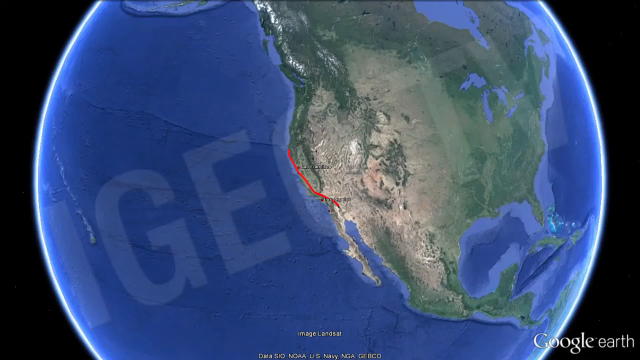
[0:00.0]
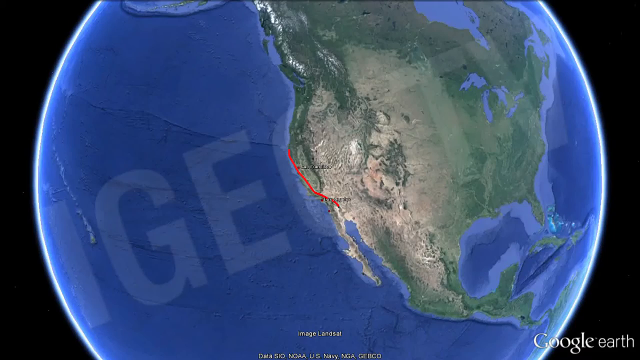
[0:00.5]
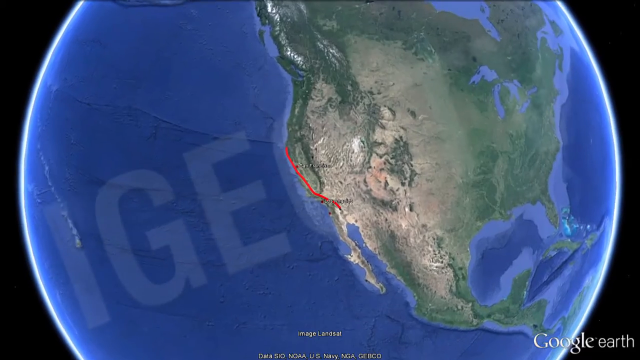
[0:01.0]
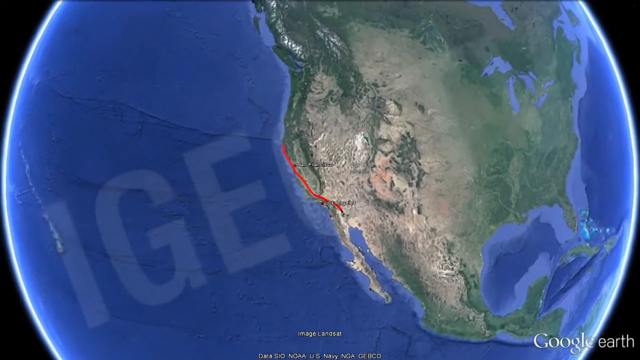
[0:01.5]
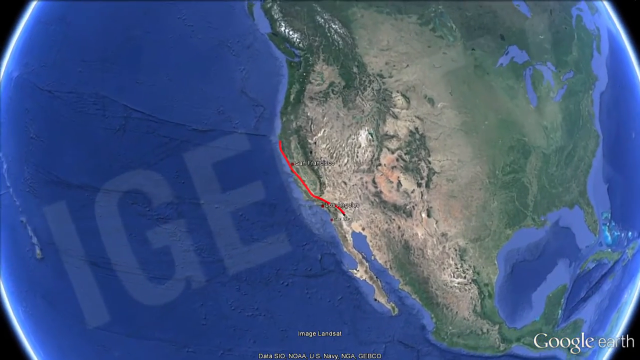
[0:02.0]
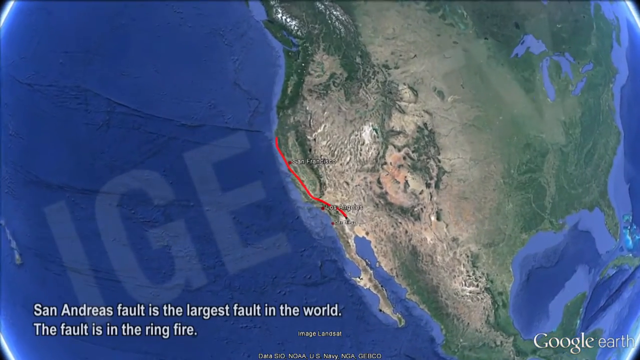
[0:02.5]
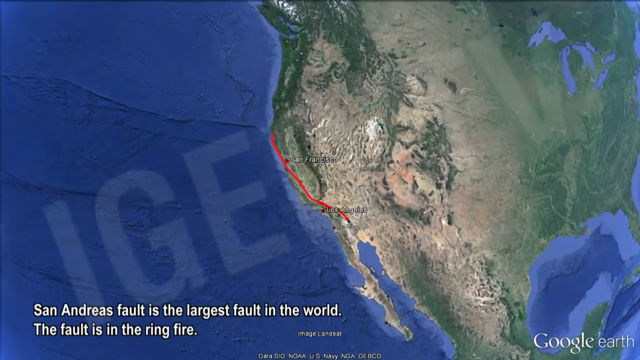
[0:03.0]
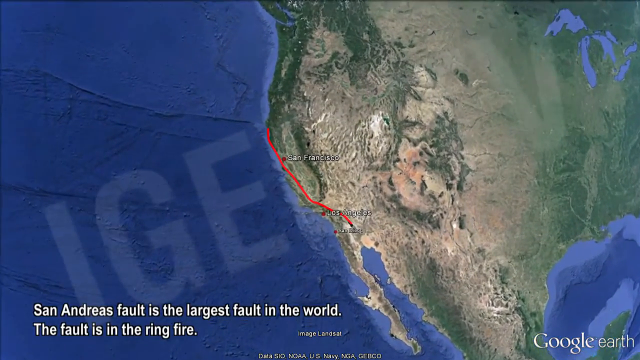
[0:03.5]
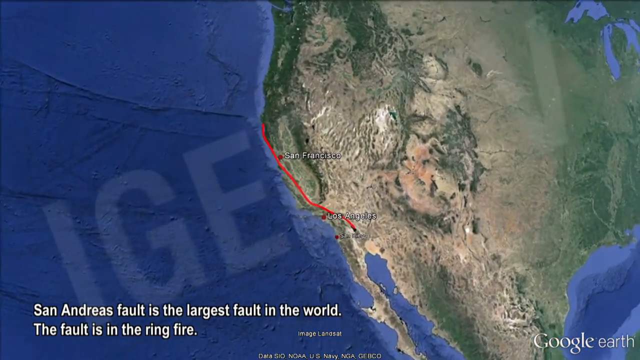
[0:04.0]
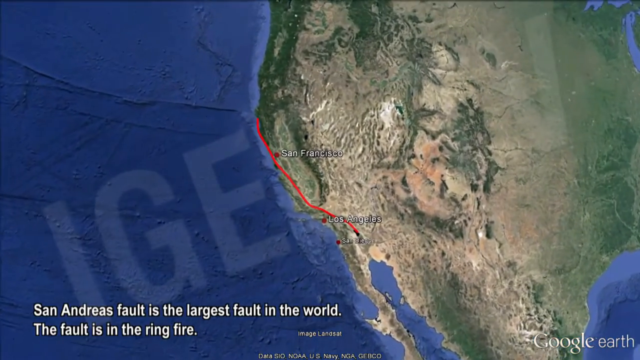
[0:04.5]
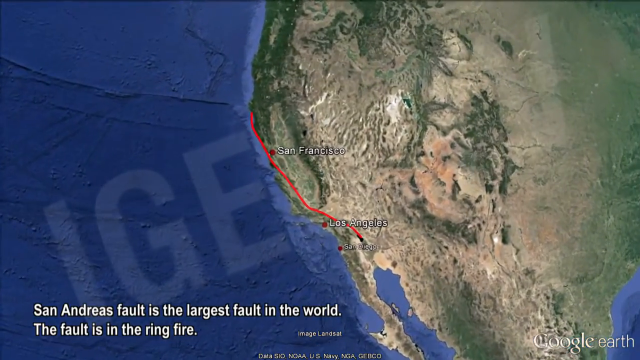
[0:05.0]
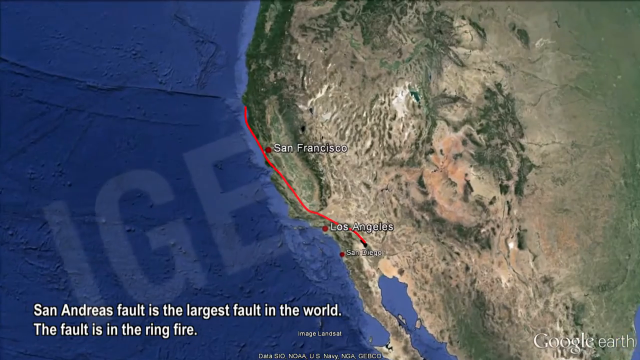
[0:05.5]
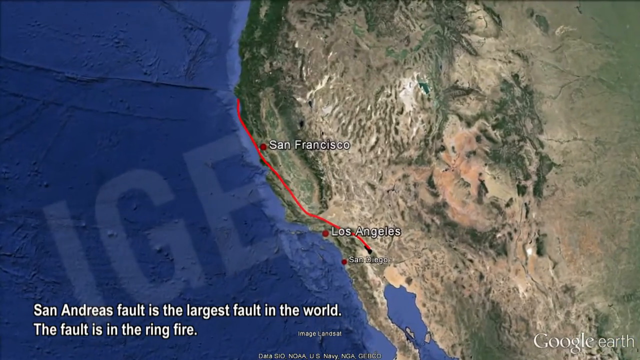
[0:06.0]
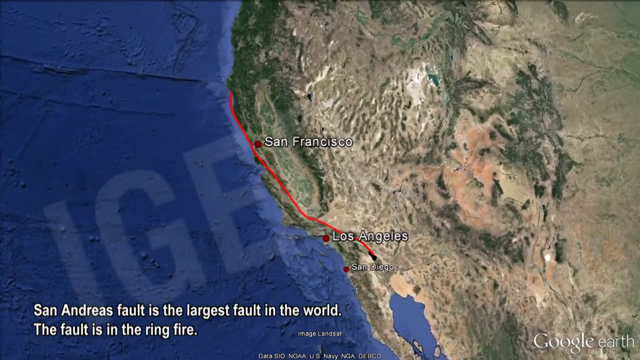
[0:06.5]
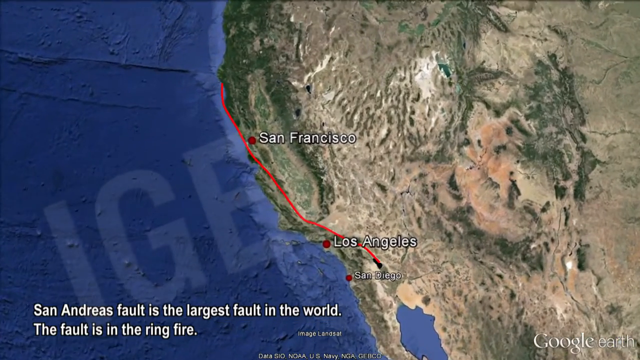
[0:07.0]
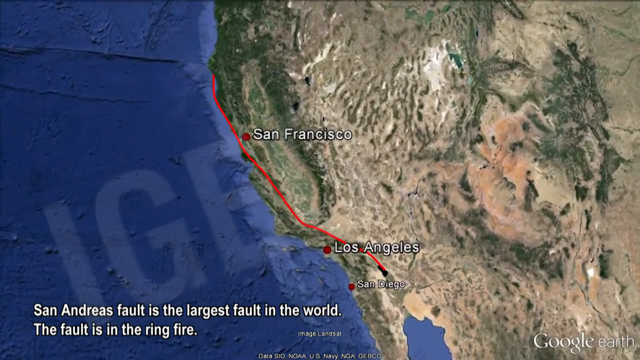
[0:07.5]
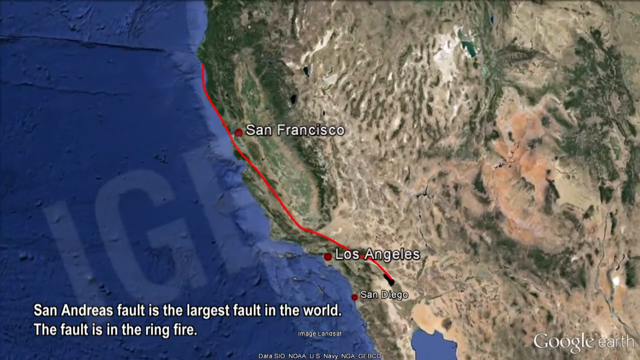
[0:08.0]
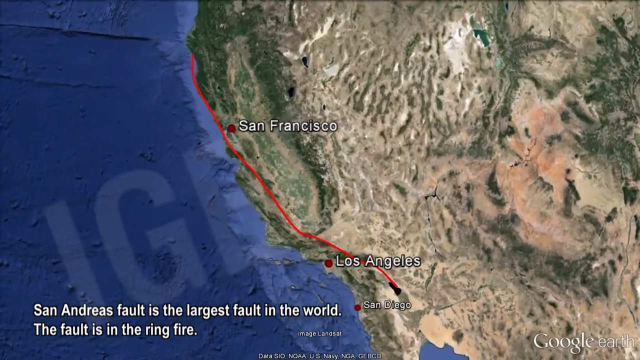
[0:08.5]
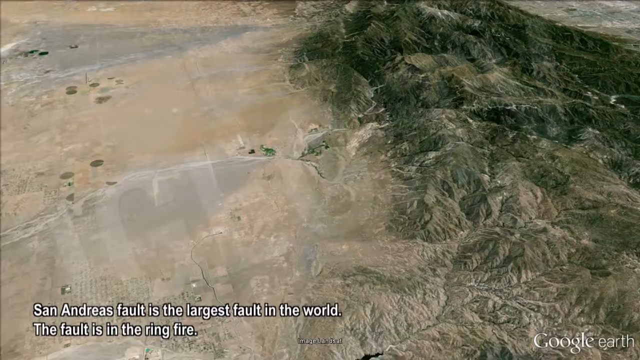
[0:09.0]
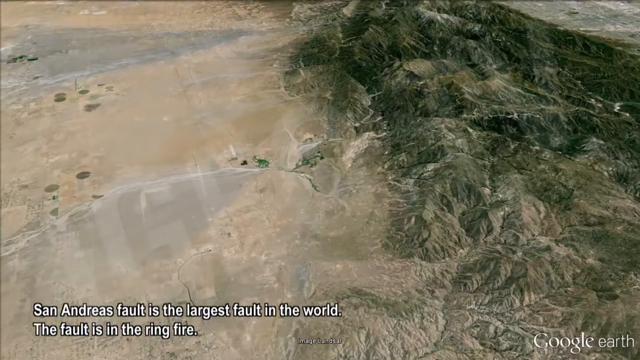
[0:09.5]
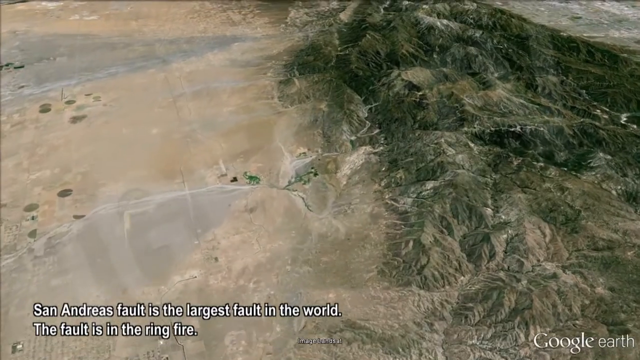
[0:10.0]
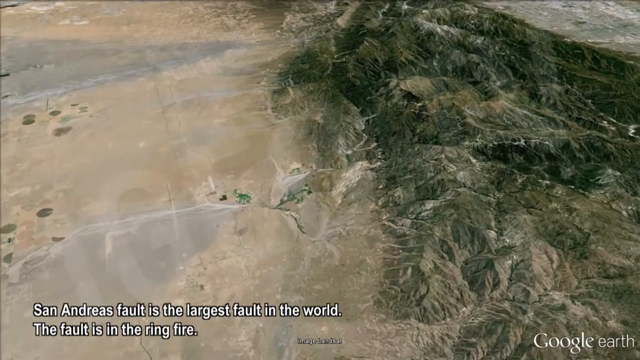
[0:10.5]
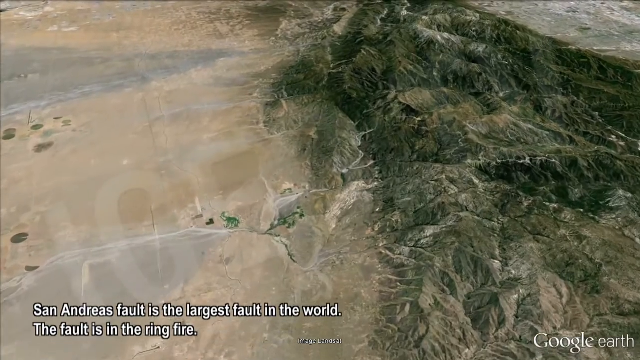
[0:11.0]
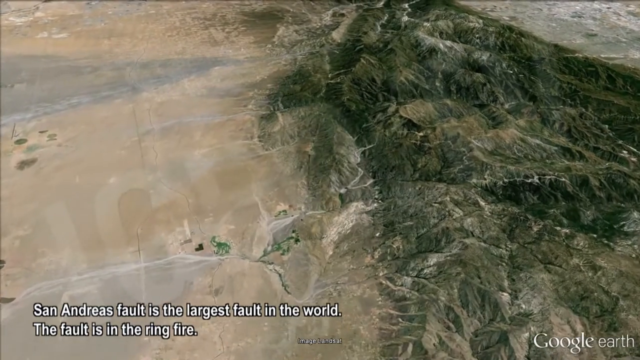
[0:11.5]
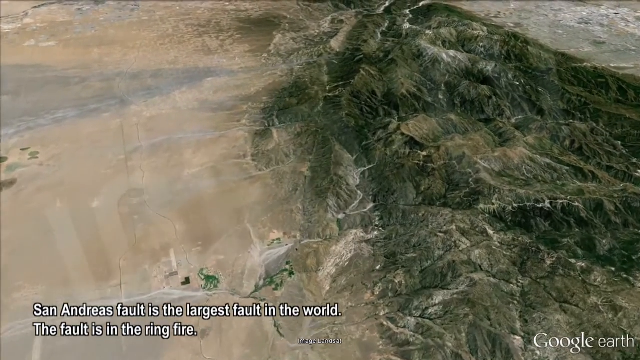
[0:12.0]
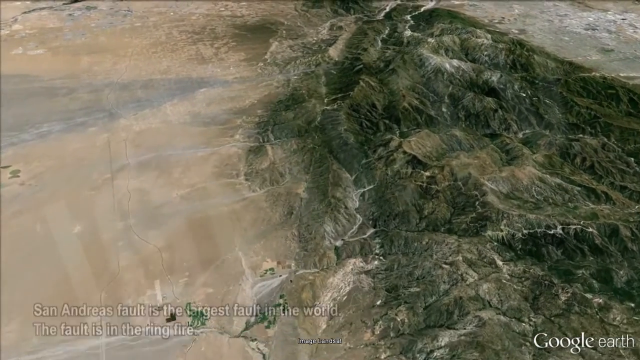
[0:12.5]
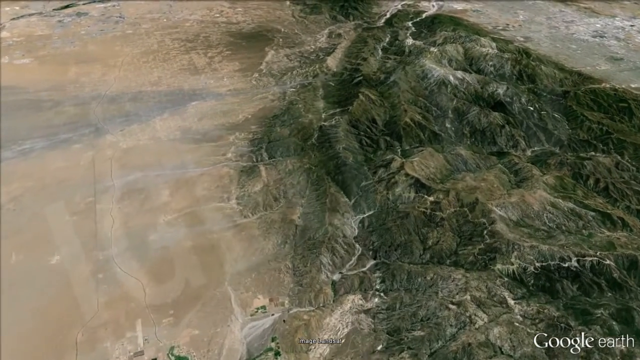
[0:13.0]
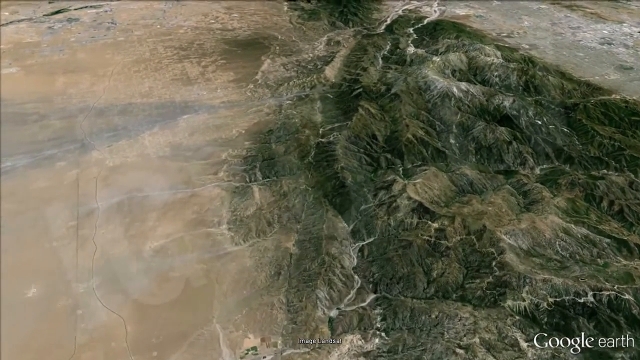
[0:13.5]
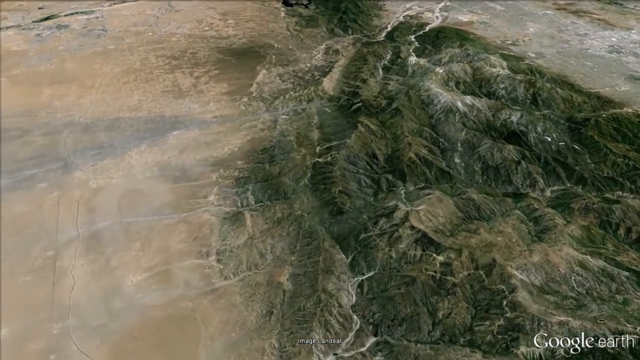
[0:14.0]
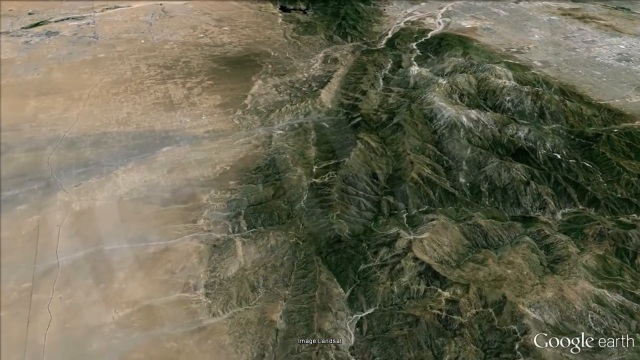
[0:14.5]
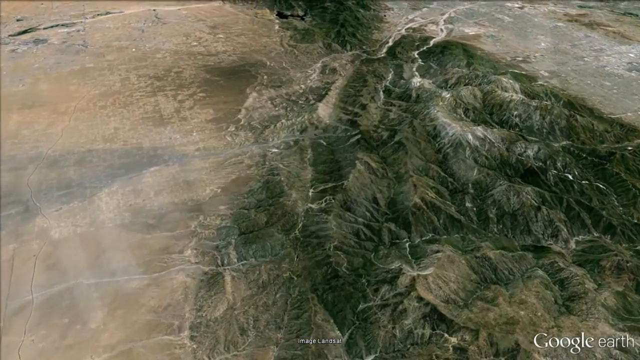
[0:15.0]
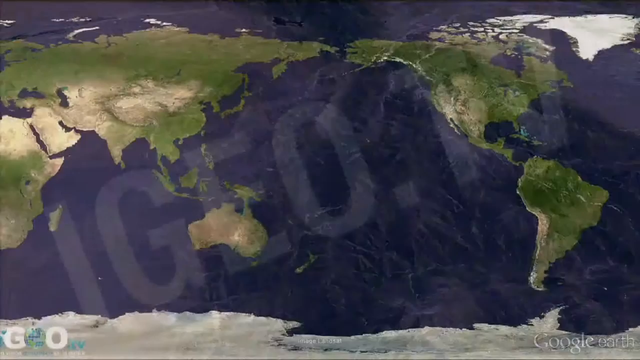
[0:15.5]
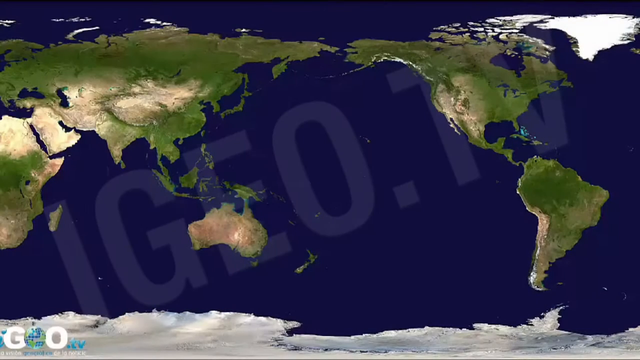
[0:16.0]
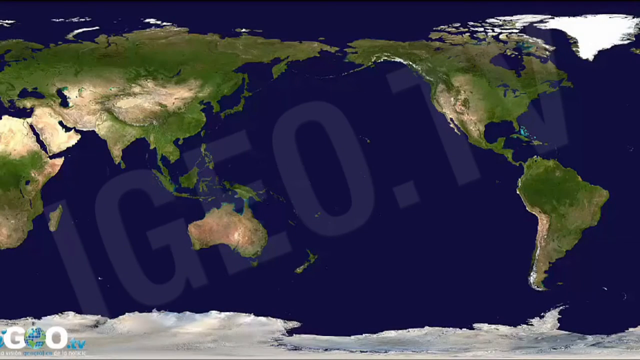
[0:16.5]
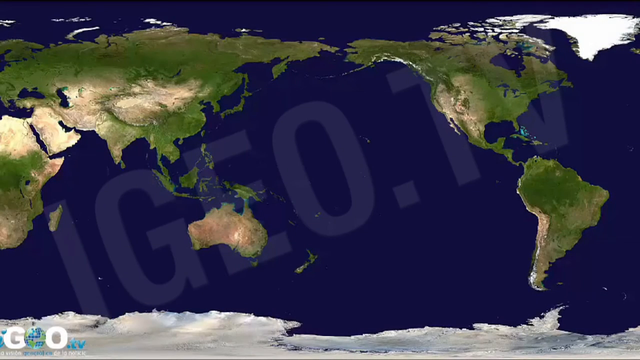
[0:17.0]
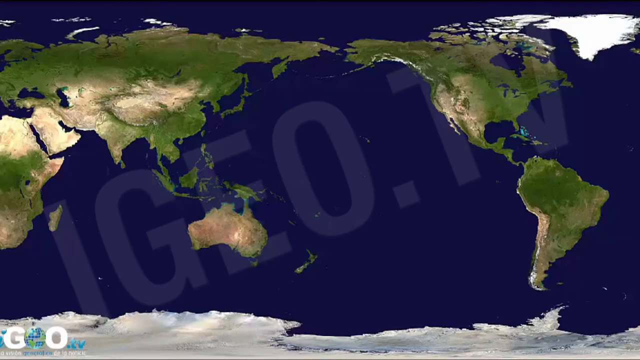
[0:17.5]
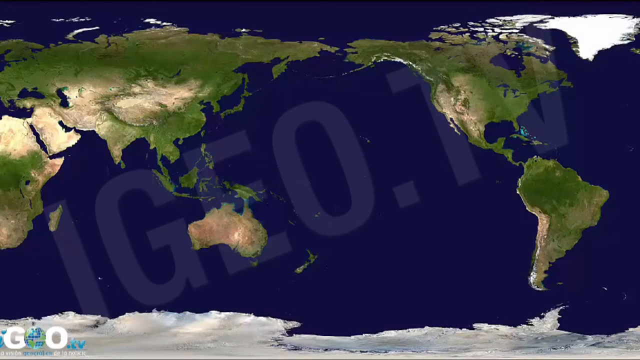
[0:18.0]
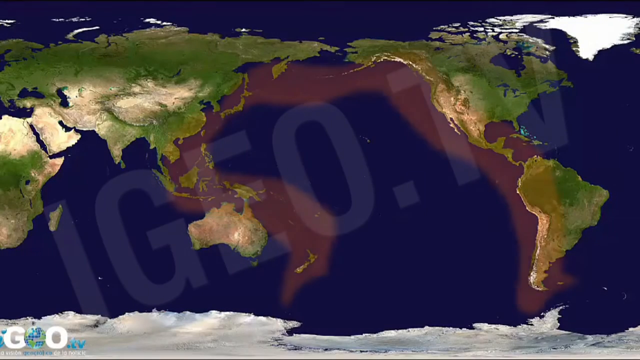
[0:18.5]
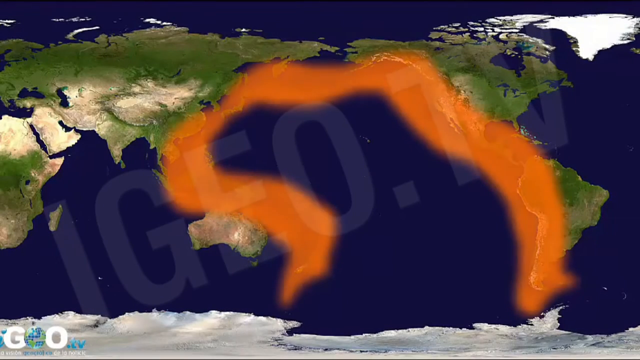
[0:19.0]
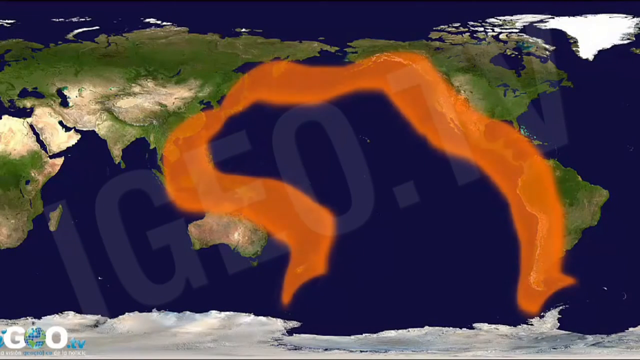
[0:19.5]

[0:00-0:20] A map of the United States shows the San Andreas Fault along California, with text saying it is the largest fault in the world and that the fault is in the Ring of Fire. The view flies over that area of the country, then shows the Ring of Fire around the Pacific Ocean, where the volcanoes are, with the text "Fire Ring" and some faint text across the screen. The San Andreas Fault is shown running from above San Francisco down to around the San Diego area, though further inland. An unclear area with green and some dry land is shown; it appears to be enhanced and seems to be California. The Ring of Fire is shown.